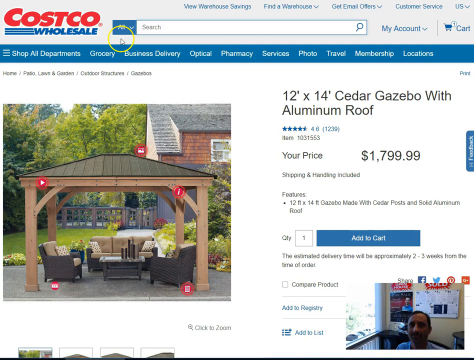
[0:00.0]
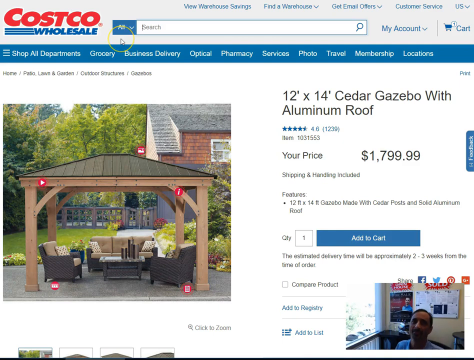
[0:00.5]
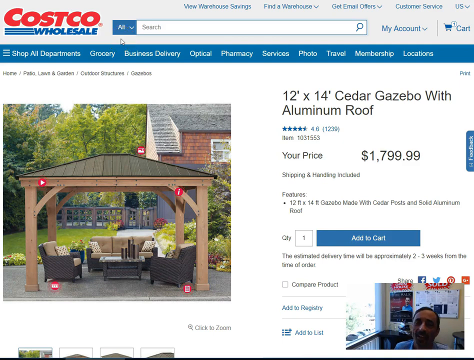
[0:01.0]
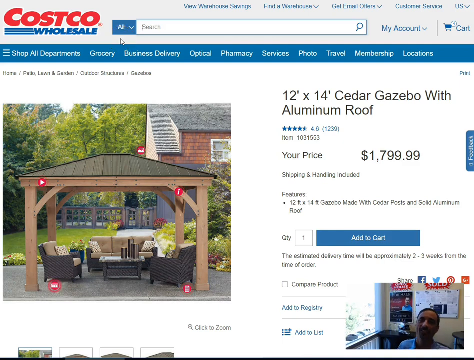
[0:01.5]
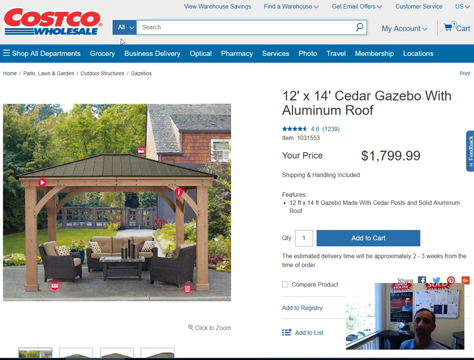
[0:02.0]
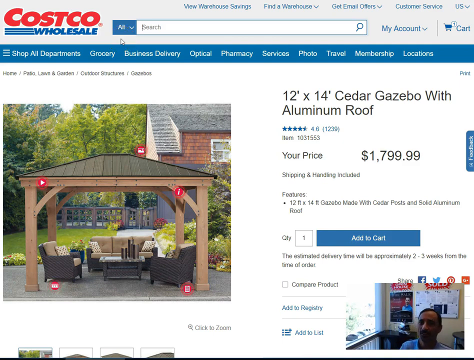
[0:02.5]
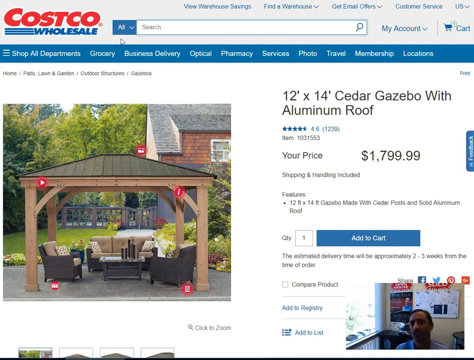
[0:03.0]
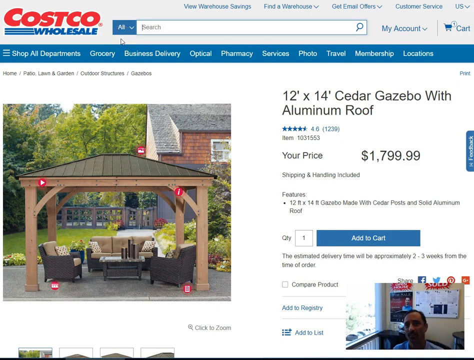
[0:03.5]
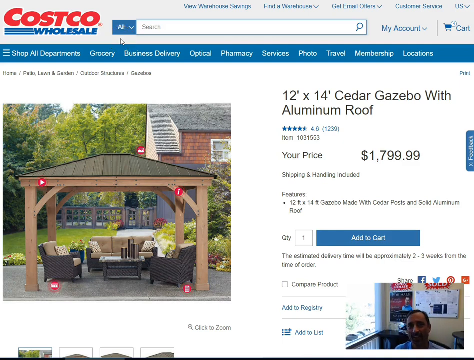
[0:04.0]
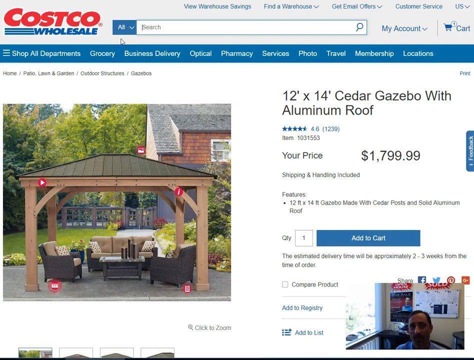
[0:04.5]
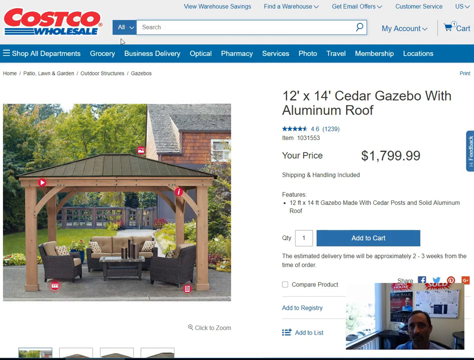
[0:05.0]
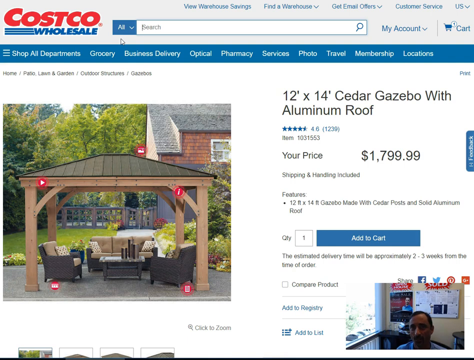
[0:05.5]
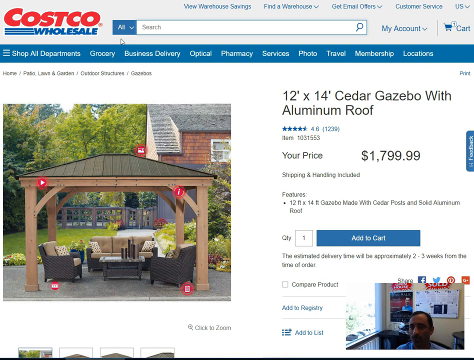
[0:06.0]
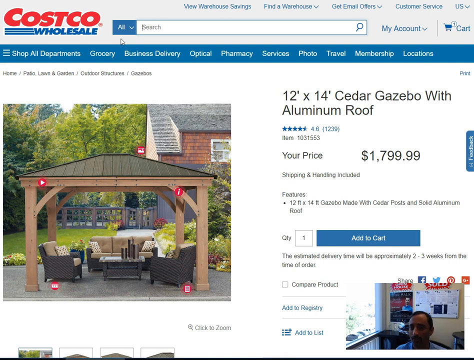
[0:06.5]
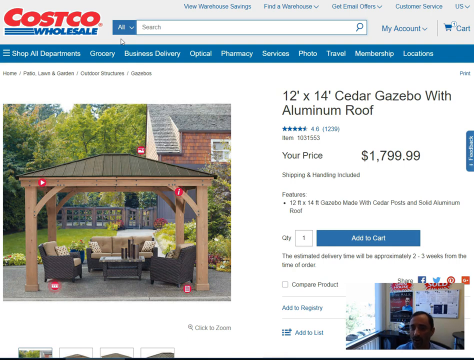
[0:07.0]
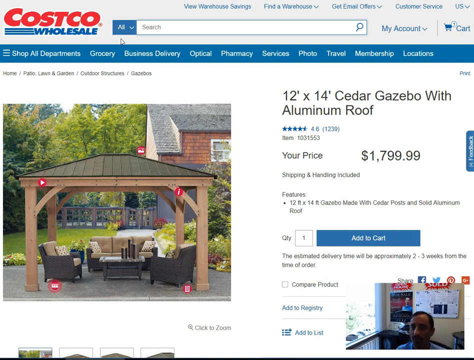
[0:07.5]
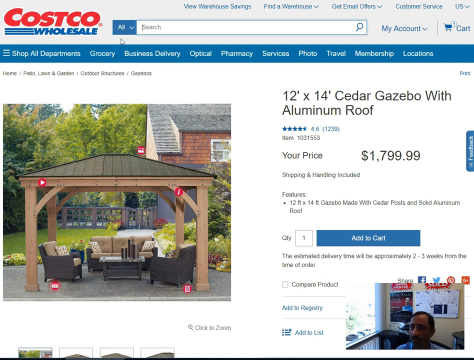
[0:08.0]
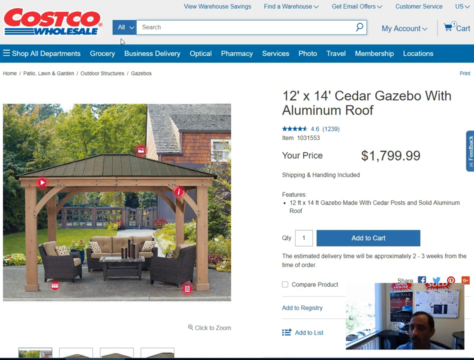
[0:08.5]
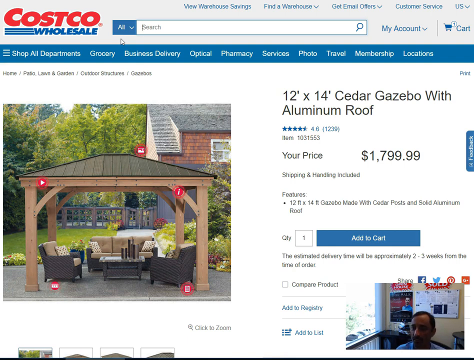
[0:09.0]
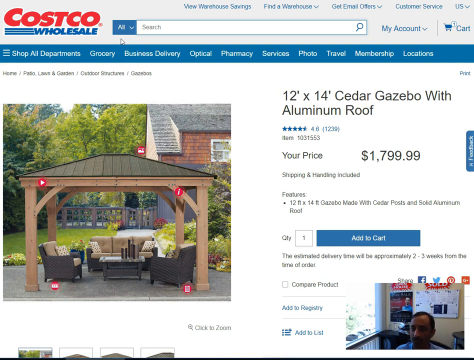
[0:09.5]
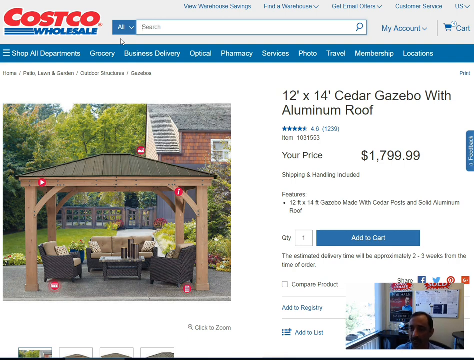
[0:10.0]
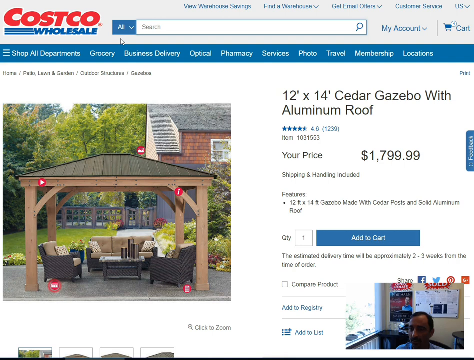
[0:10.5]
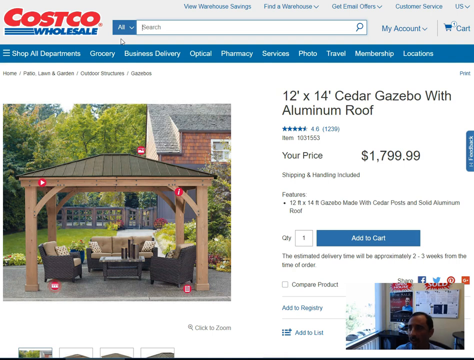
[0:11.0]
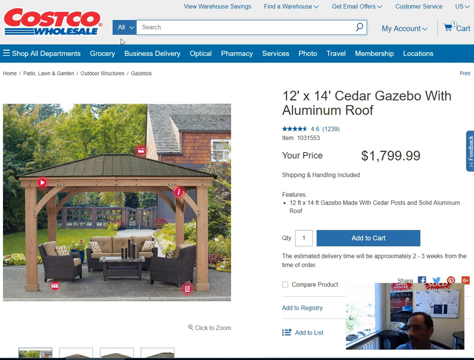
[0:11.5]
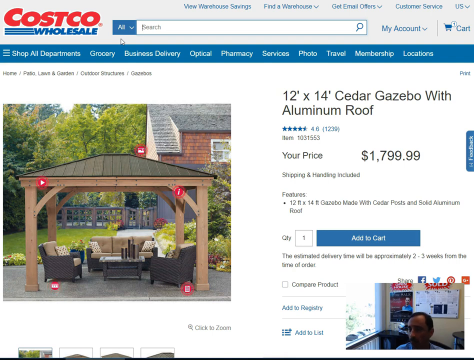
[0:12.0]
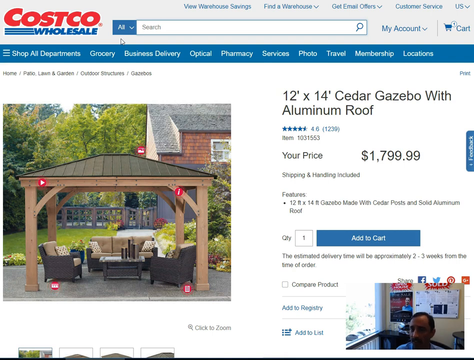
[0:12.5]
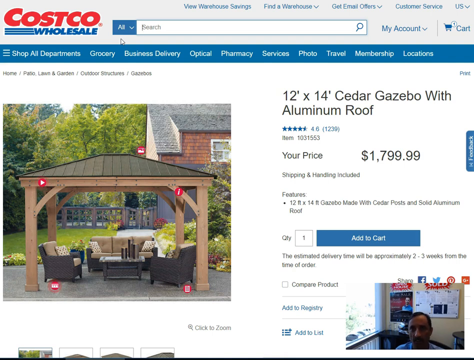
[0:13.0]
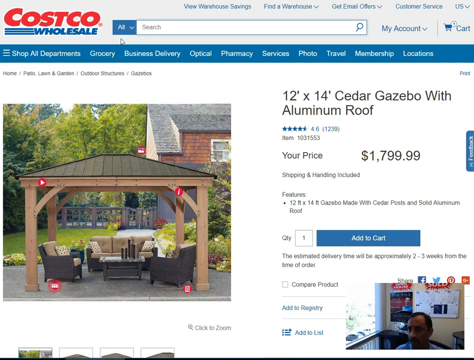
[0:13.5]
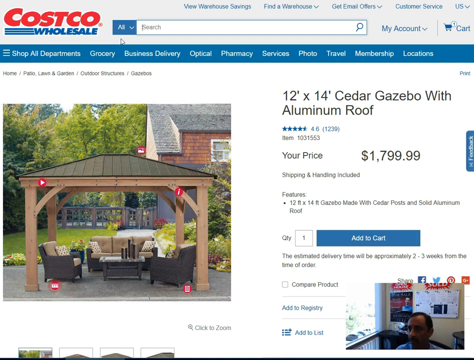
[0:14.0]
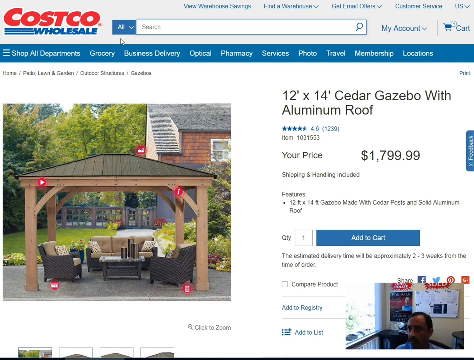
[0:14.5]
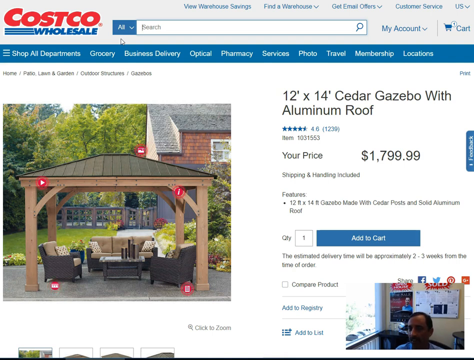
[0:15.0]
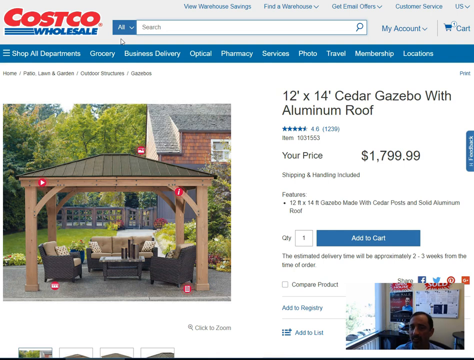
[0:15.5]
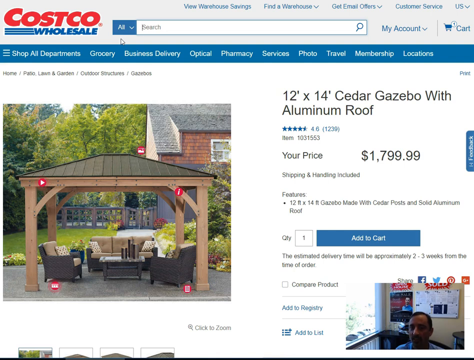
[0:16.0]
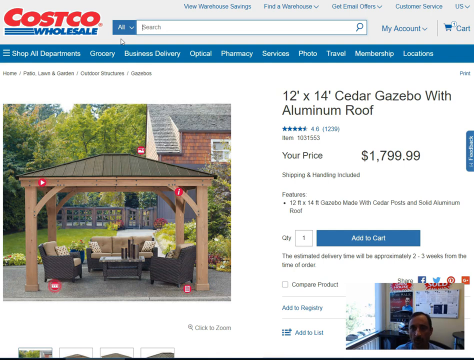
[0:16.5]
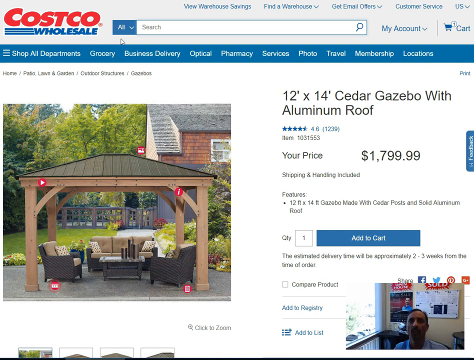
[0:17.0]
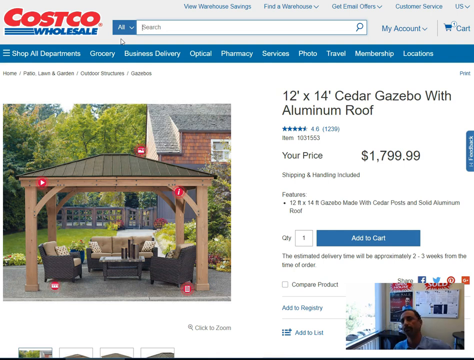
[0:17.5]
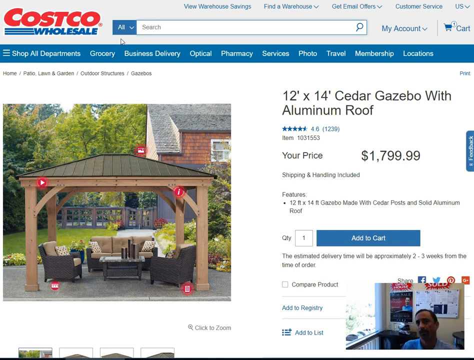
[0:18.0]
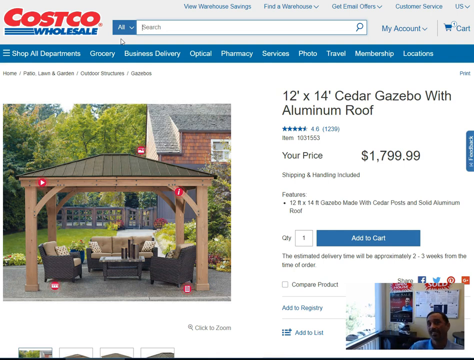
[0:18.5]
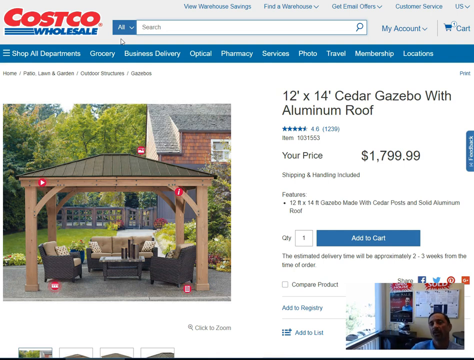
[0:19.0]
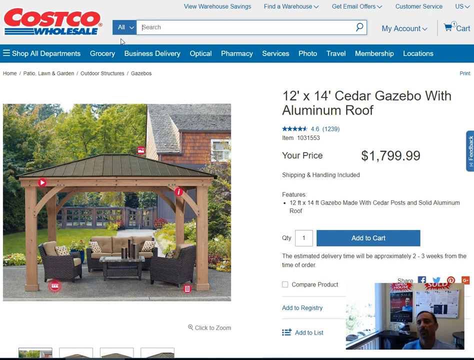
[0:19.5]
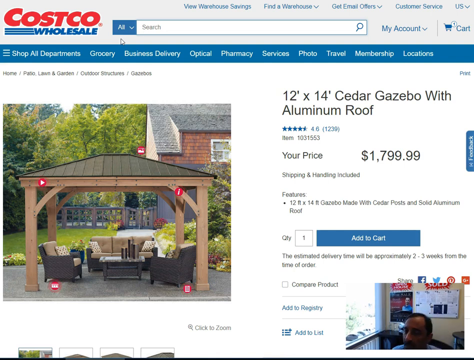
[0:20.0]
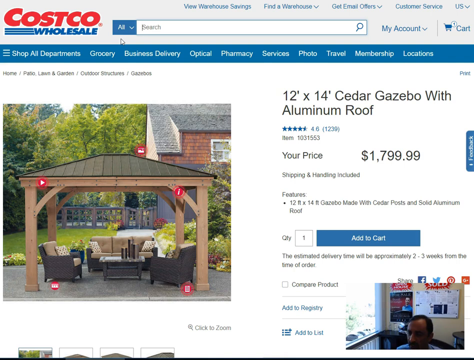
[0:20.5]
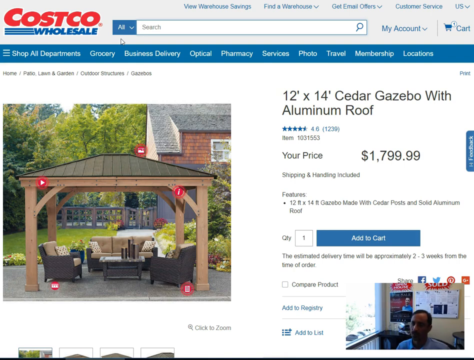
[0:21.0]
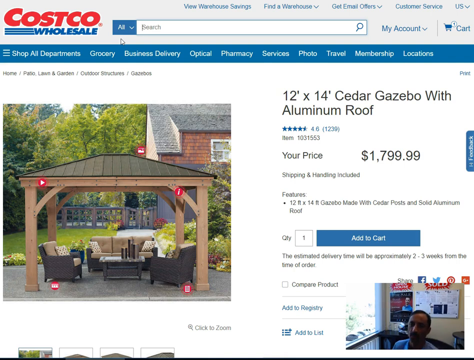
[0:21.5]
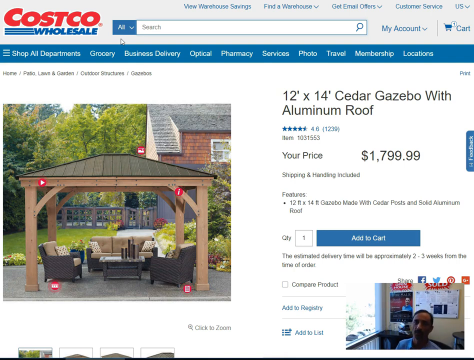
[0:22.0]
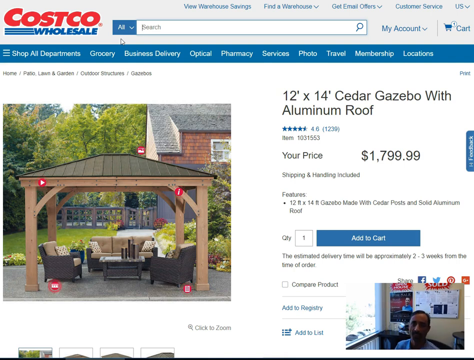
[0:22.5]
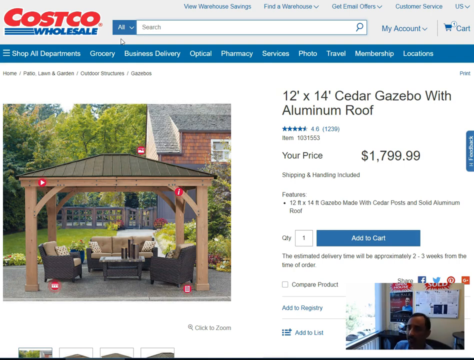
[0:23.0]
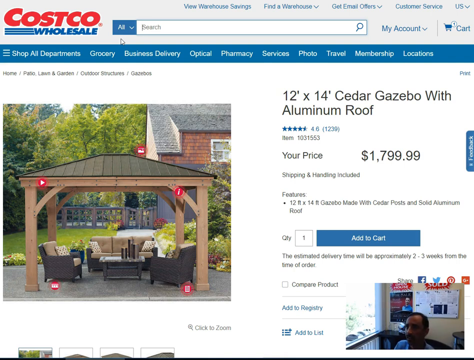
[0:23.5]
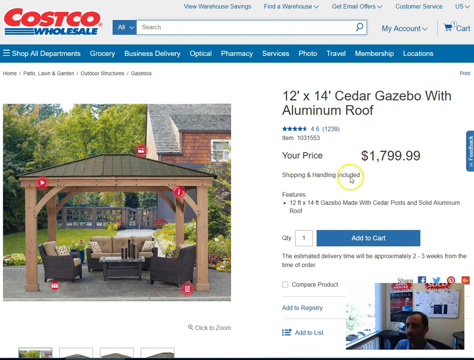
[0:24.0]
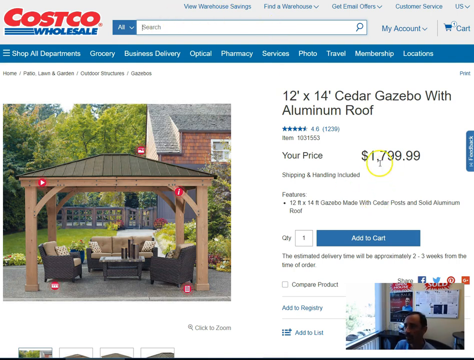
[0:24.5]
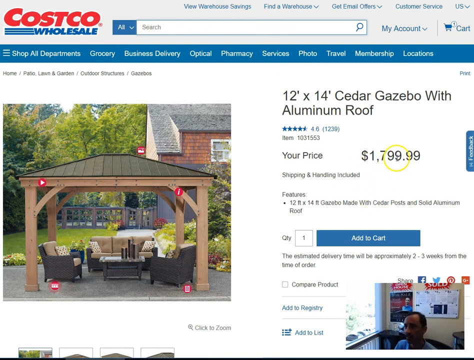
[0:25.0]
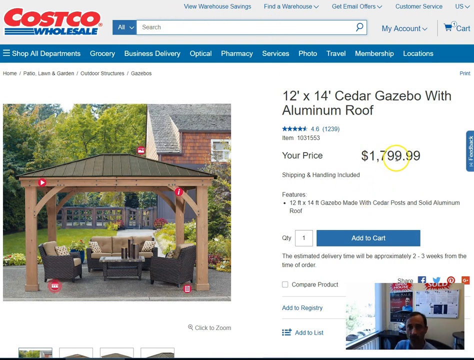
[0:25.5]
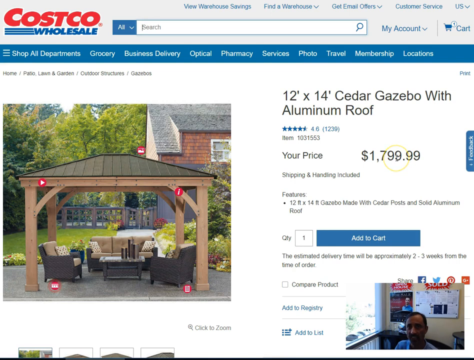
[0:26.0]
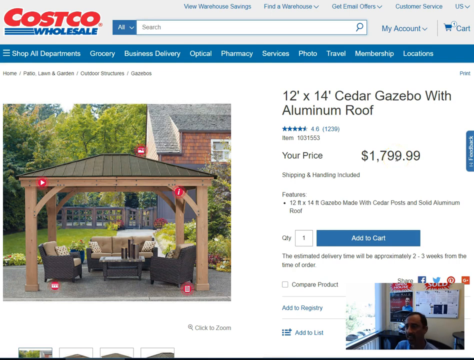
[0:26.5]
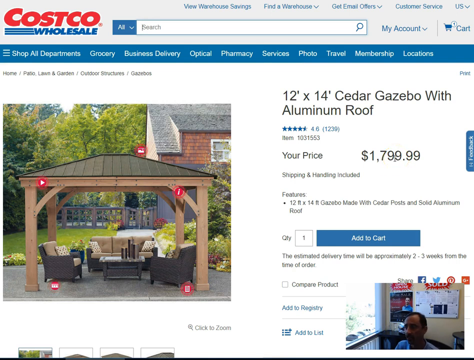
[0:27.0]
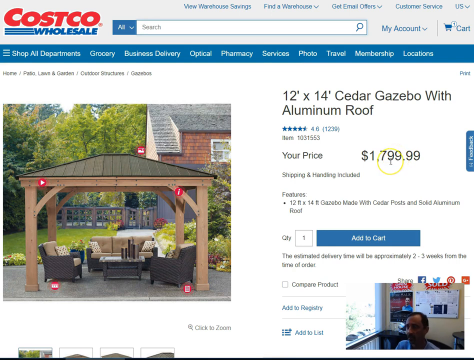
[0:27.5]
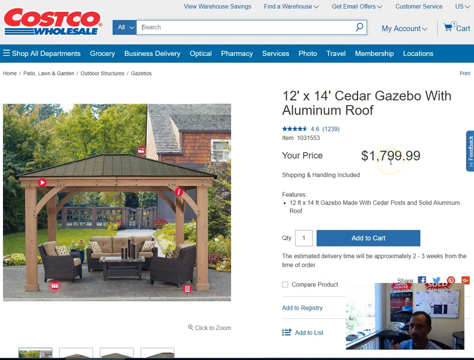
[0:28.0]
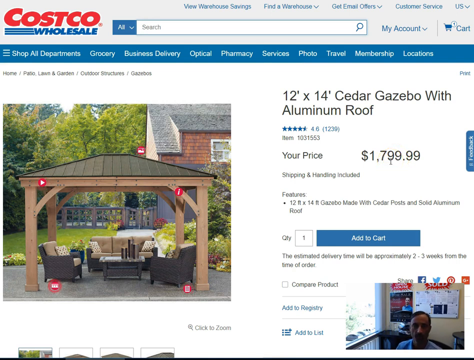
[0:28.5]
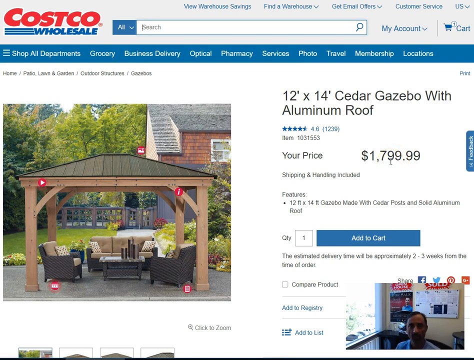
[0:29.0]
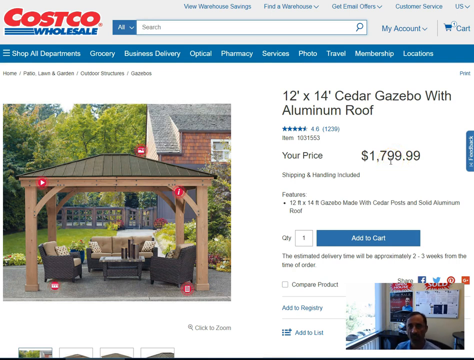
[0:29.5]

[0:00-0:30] A Costco website shows a gazebo, with its specifications on the right side. The text says "12 by 14 cedar gazebo with aluminum roof," and underneath it the price reads "$1,799.99." The gazebo has a wooden frame and a black roof. Inside it are some chairs and what looks like an outdoor sofa; the backrest is brown, and the chair frames appear to be a dark brown color. There is also a coffee table. Behind it is a yard, on the right side is a house with bricks and a gray top, and in the background are a lot of green trees.